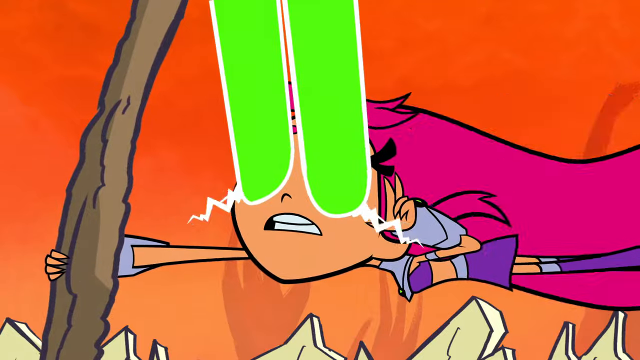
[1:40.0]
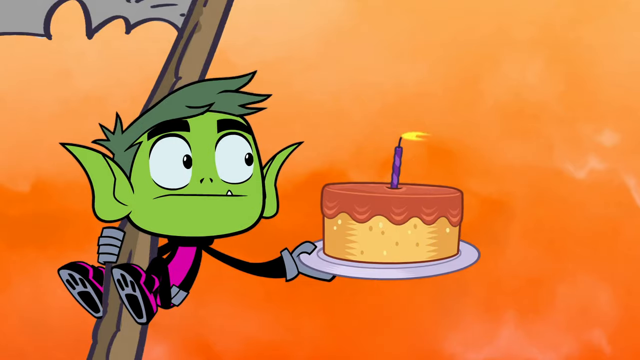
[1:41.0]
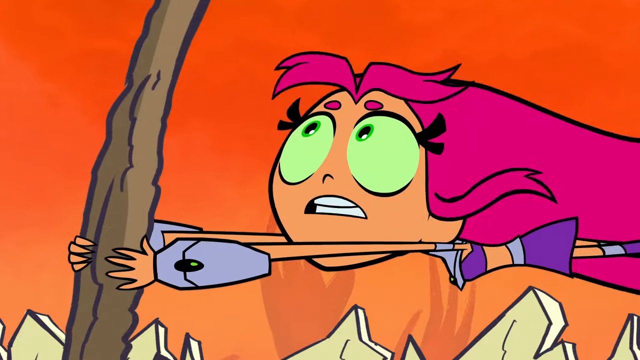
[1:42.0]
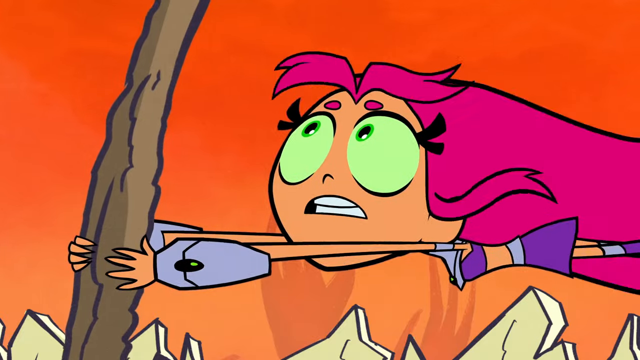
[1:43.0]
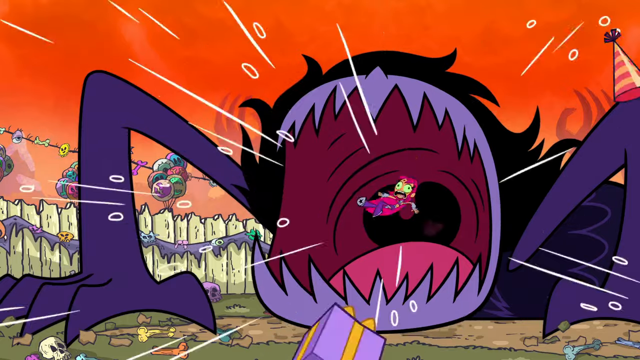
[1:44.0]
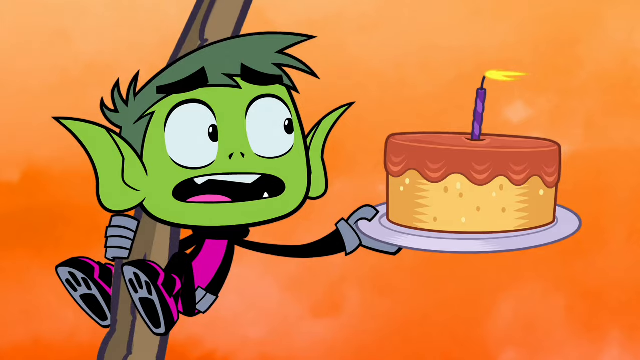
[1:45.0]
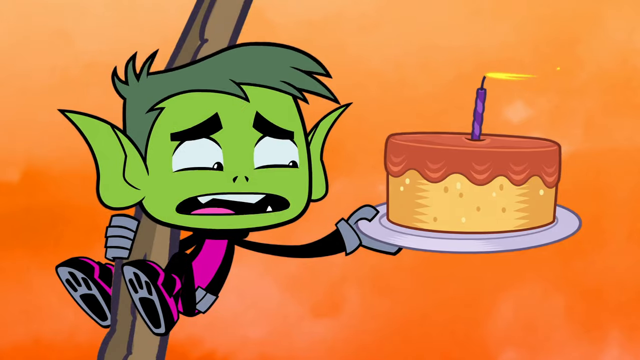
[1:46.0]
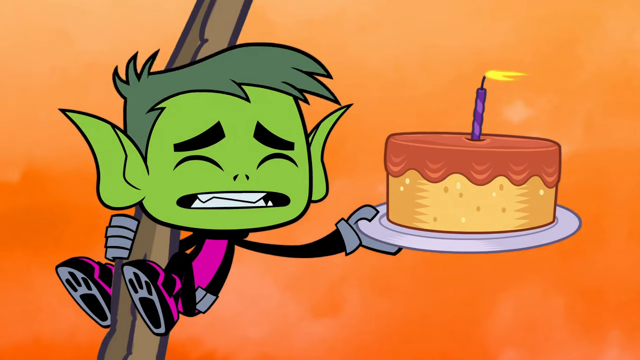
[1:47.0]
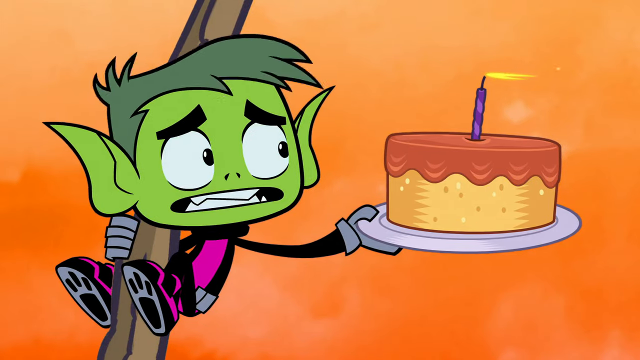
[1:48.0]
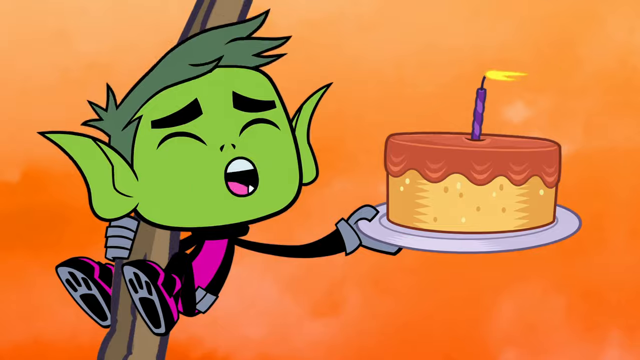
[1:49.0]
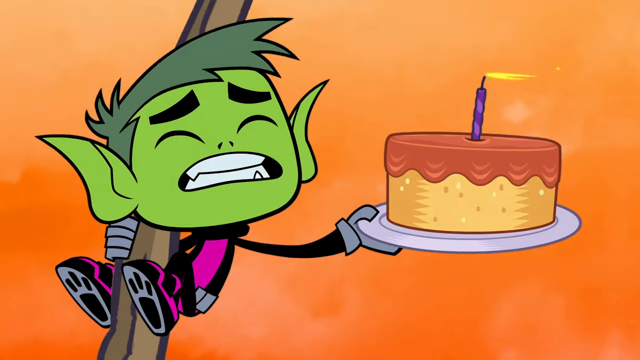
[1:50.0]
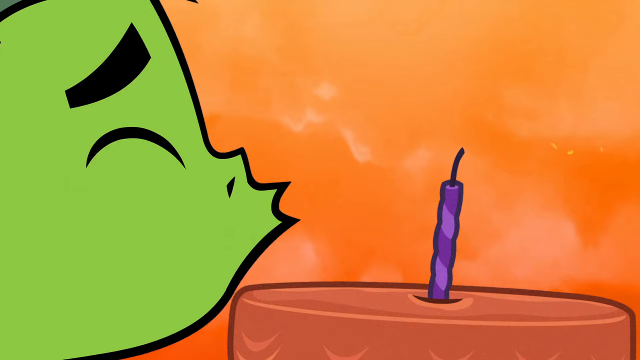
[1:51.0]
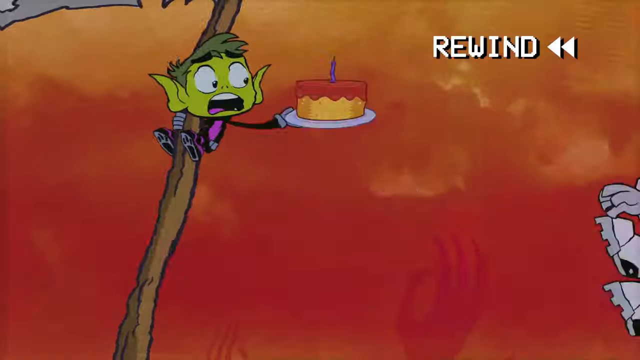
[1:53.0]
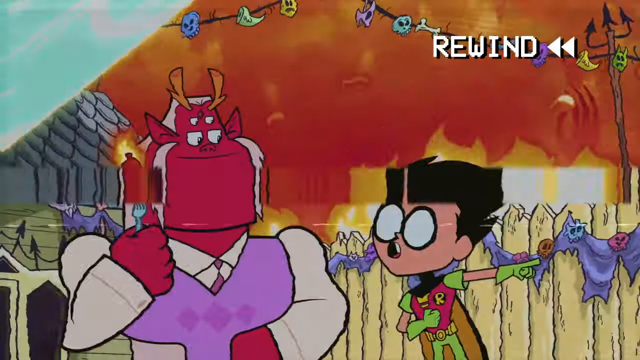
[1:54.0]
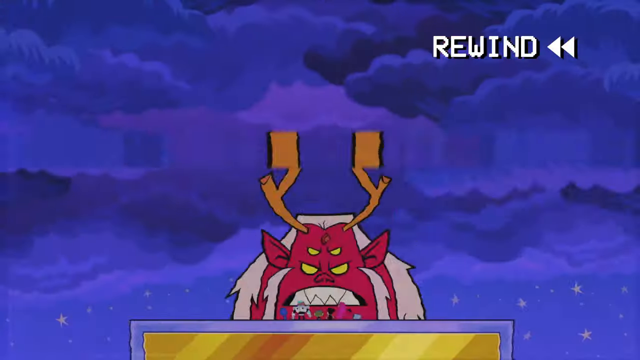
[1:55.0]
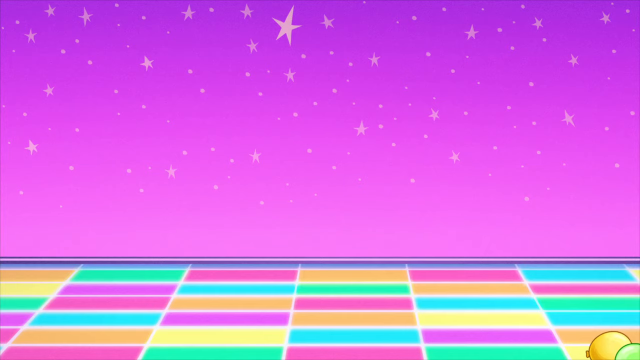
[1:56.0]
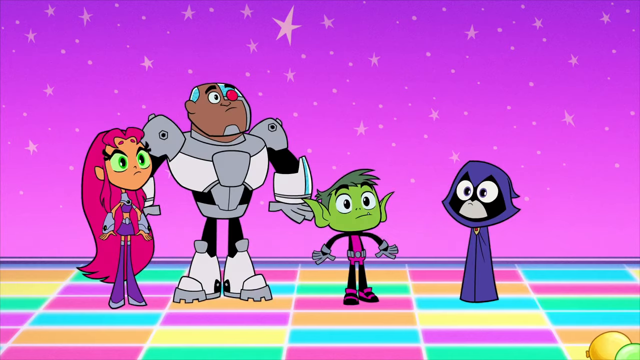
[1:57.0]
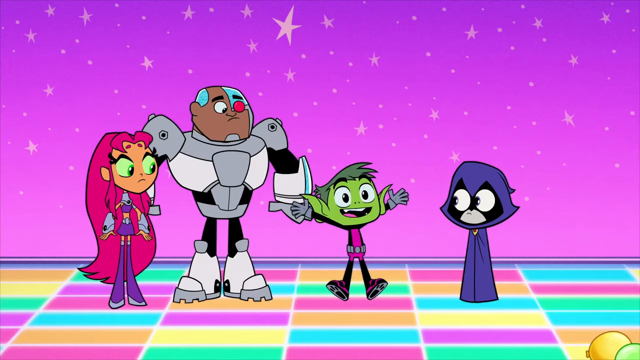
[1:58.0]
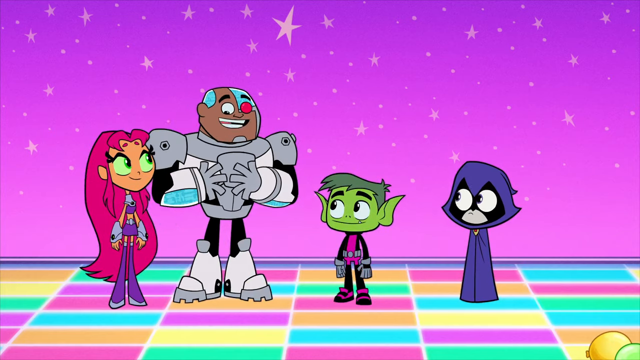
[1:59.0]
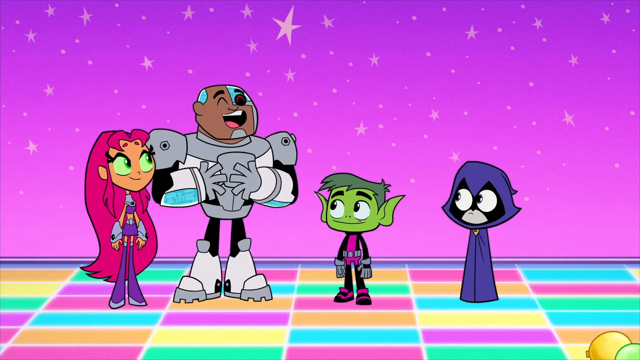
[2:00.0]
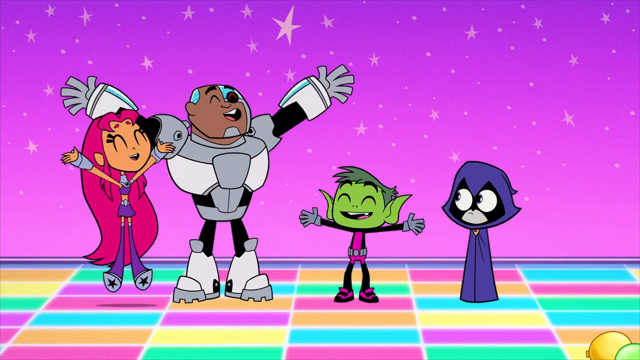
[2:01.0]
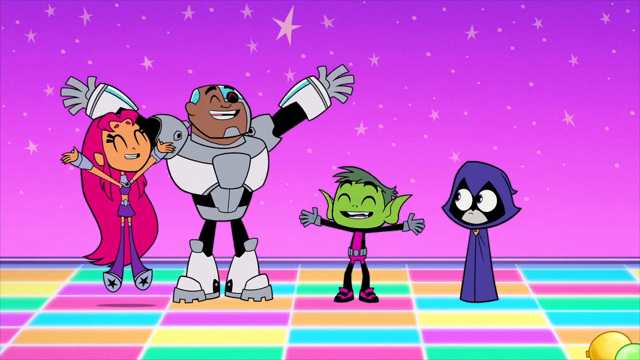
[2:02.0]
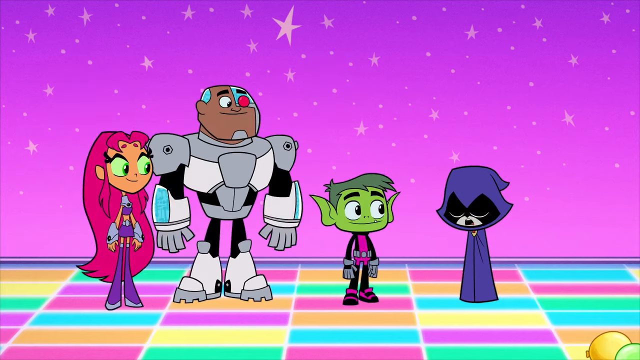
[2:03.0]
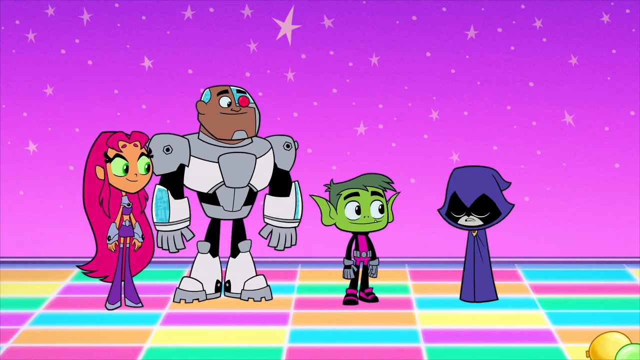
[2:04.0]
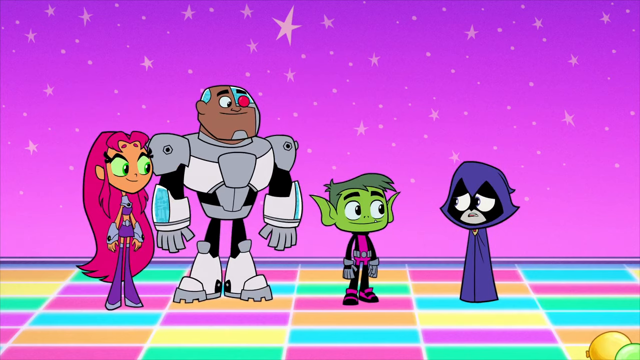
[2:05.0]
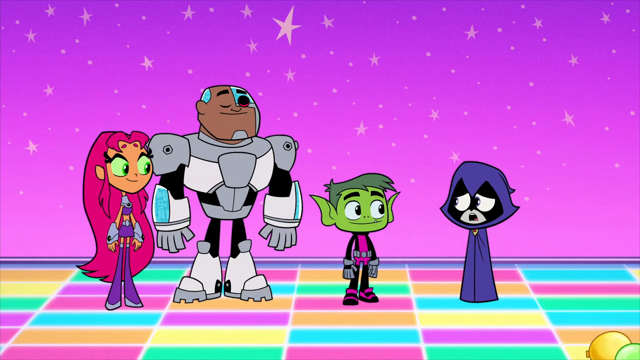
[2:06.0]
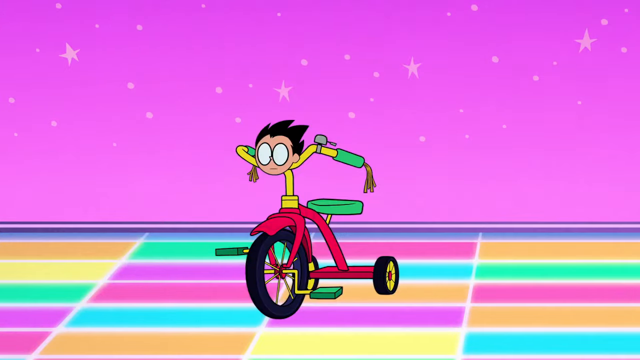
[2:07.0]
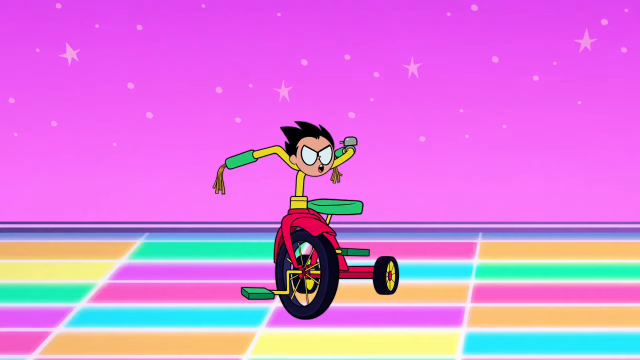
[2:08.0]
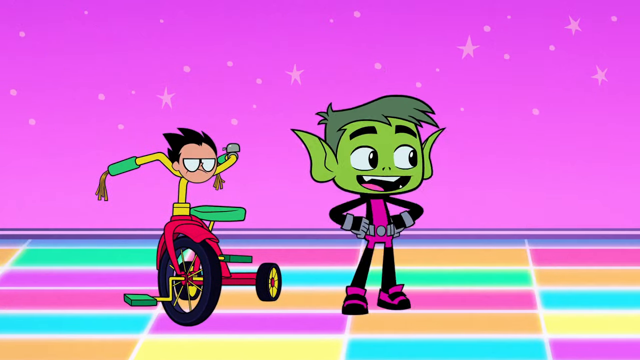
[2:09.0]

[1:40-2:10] The flying girl with pink hair and a purple outfit activates her laser-beam eyes and points them up toward the green goblin holding the cake. The cake has a candle, and her laser beams light it. She says something to the green goblin and then is sucked into the monster's mouth. The green goblin, kind of freaking out while holding the candle, blows it out. There is a blackout, then everything that happened at the party rewinds, apparently because the candle sets back time. The scene then moves to a really bright area with a purple background with stars and a floor like a 1970s dance floor. The green goblin, the cyborg guy and the flying girl with the purple outfit and pink hair look relieved, as if they are saved, and talk to what looks like a cat in a purple cloak with a black face and eyes. They look happy to be alive and jump up and down, but the black cat says something and appears to be sad. The scene switches to the Robin character: only his head is visible, and the rest of his body is a tricycle in his usual colors, with red and yellow frames, black tires, green pedals and a green seat. He is freaking out at being a tricycle, and the green goblin comes up next to him.